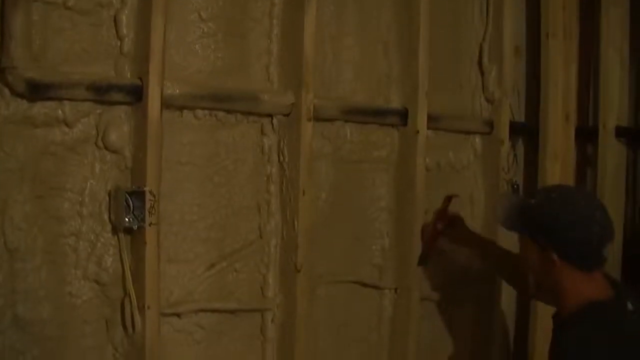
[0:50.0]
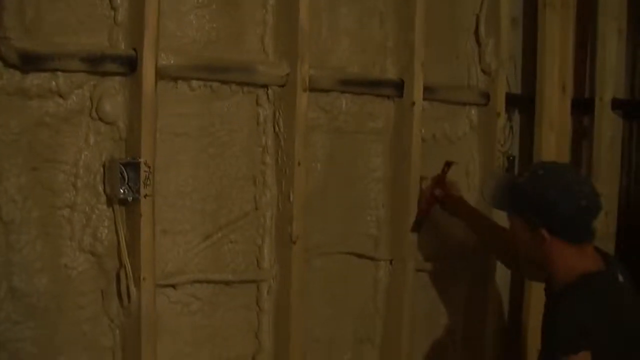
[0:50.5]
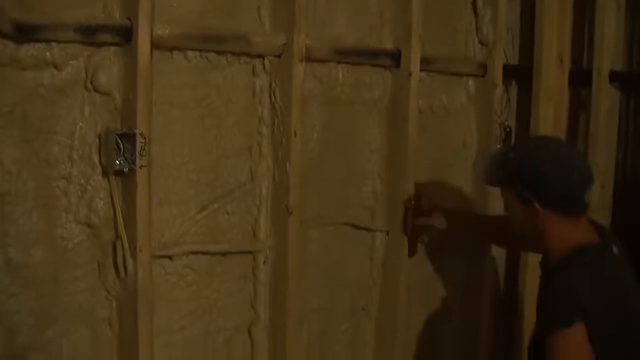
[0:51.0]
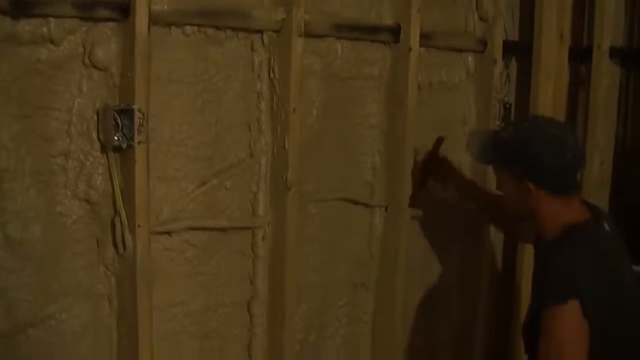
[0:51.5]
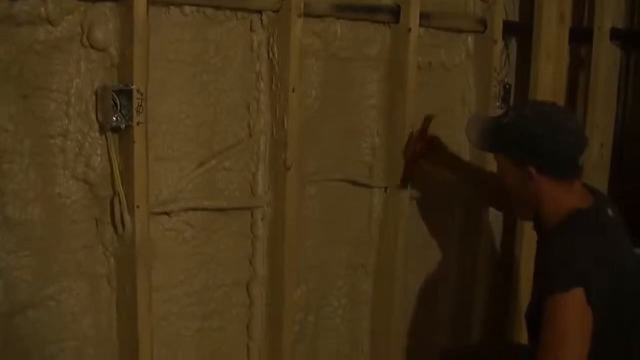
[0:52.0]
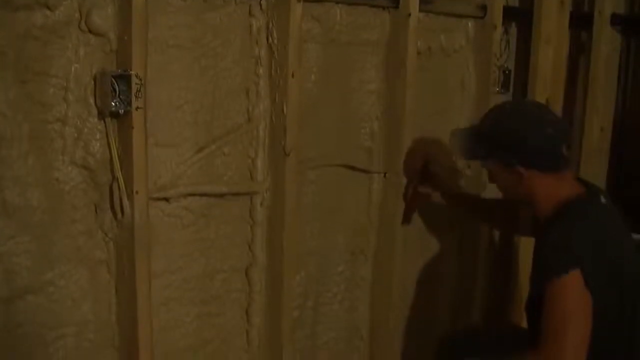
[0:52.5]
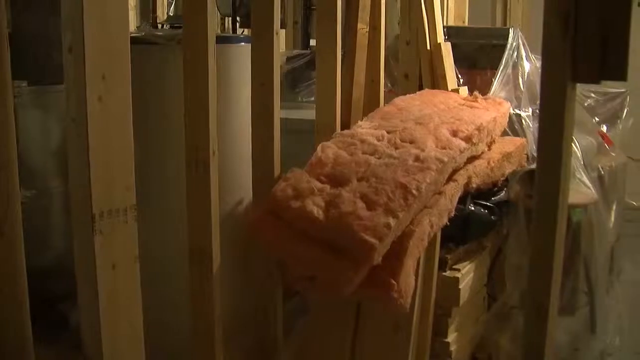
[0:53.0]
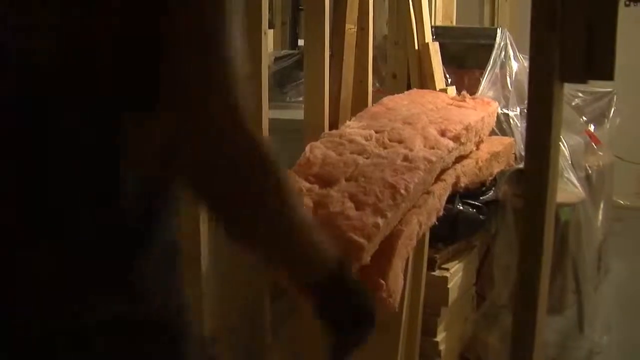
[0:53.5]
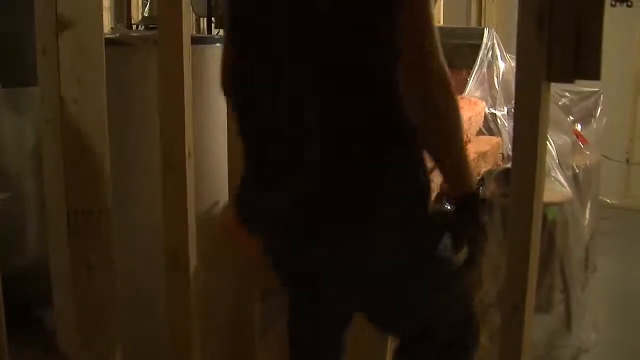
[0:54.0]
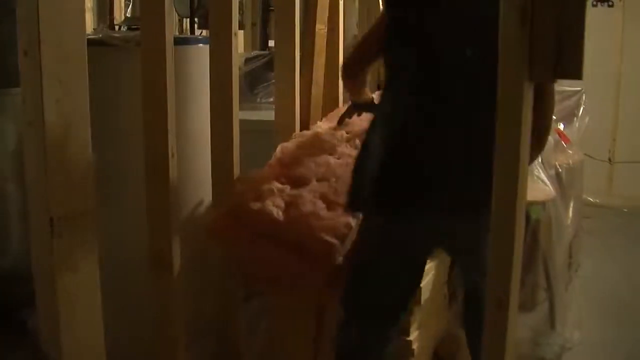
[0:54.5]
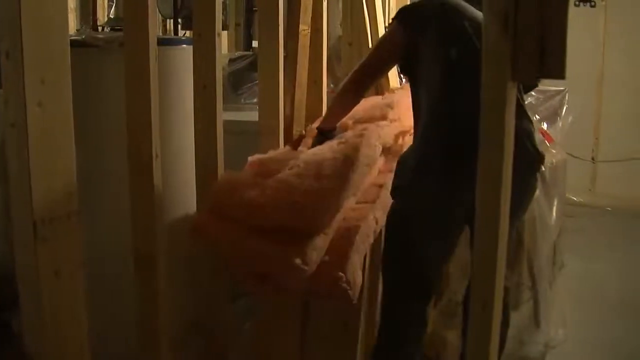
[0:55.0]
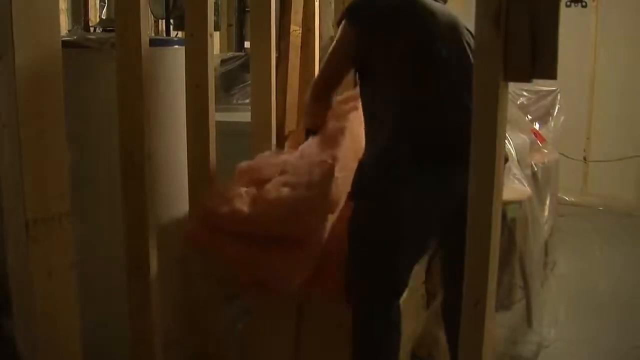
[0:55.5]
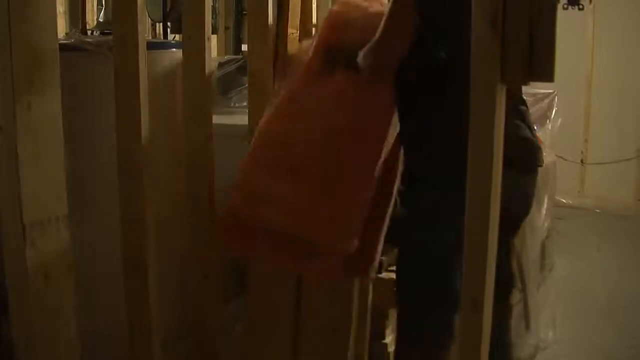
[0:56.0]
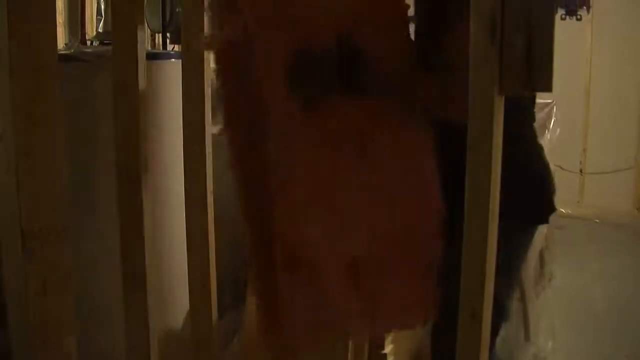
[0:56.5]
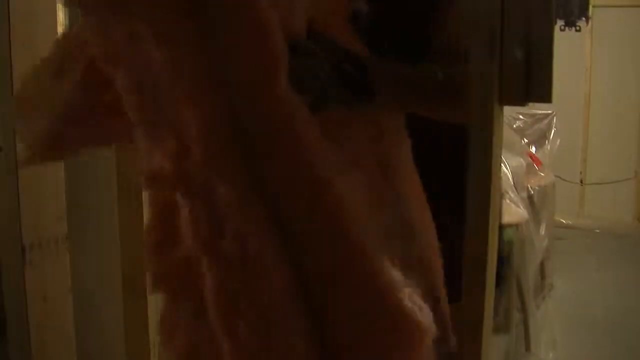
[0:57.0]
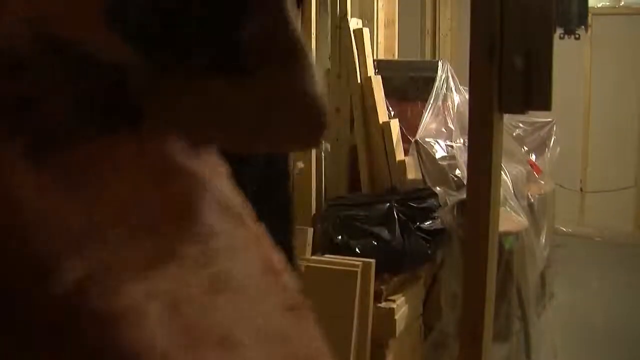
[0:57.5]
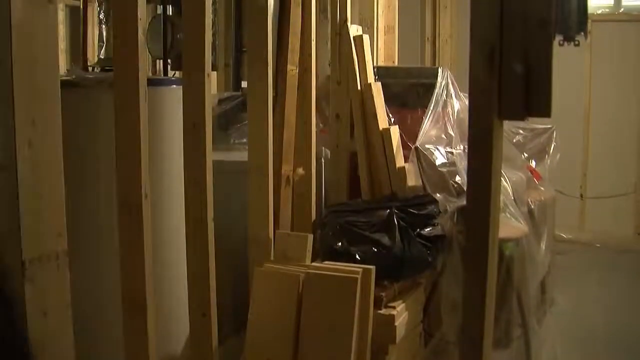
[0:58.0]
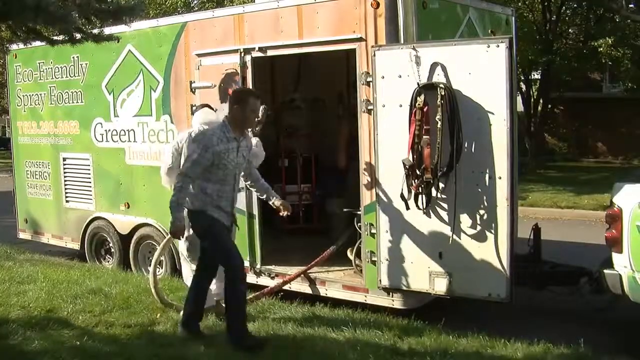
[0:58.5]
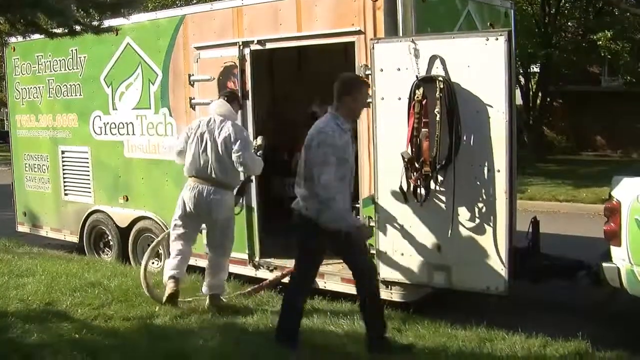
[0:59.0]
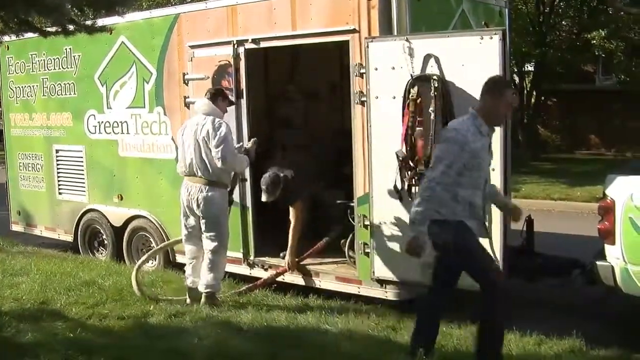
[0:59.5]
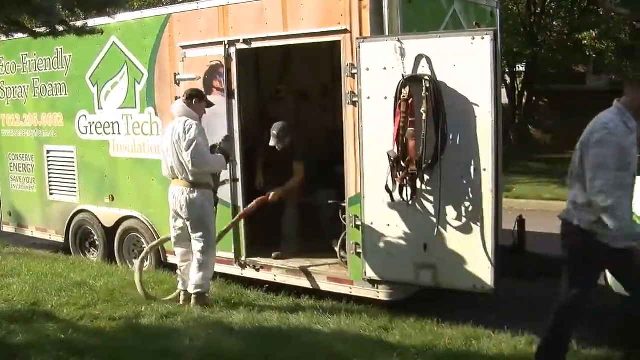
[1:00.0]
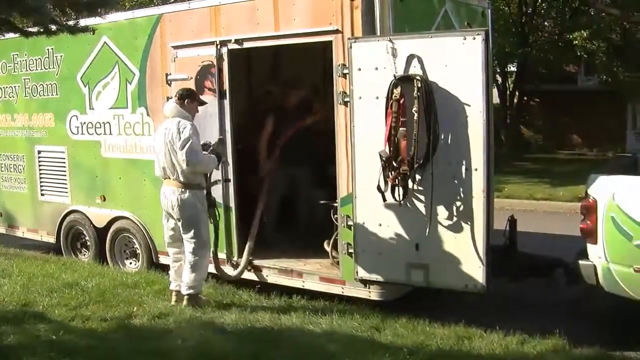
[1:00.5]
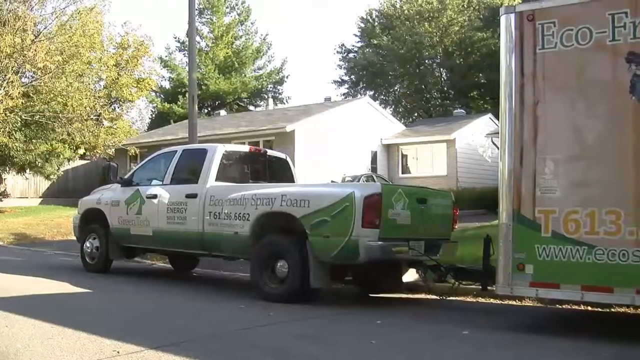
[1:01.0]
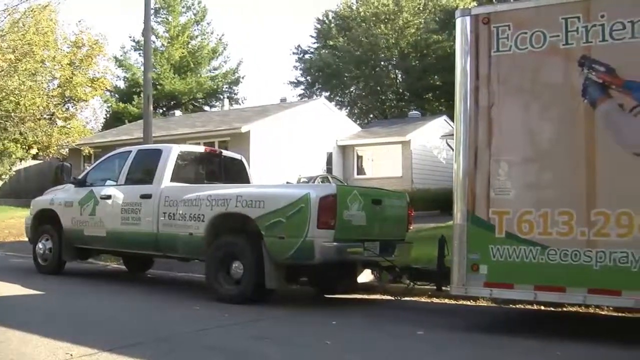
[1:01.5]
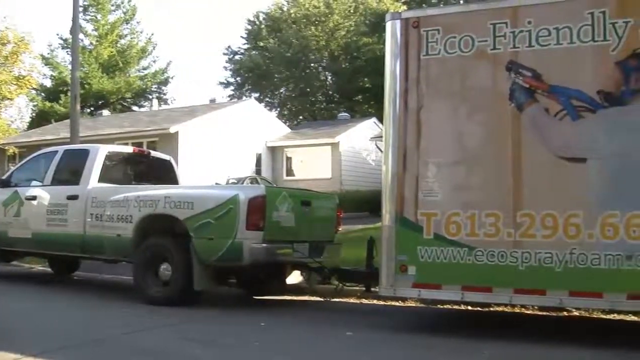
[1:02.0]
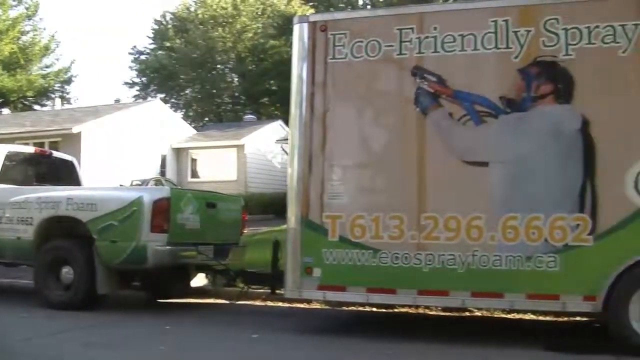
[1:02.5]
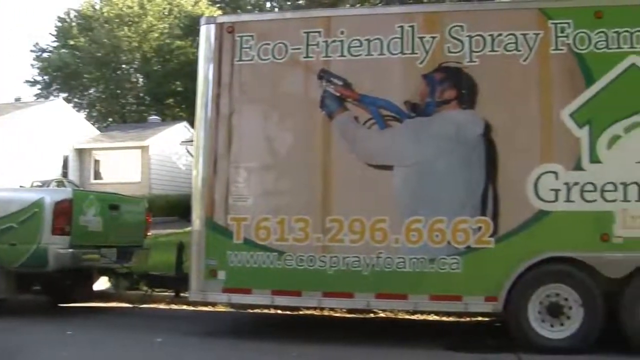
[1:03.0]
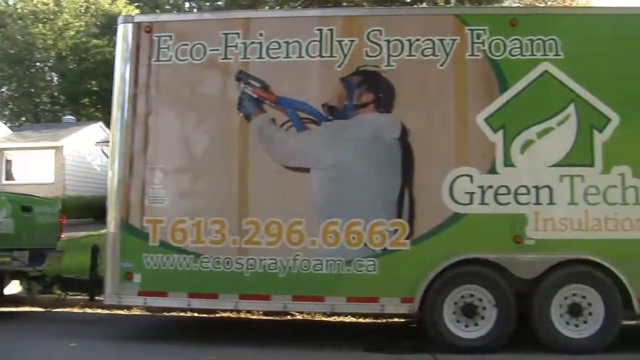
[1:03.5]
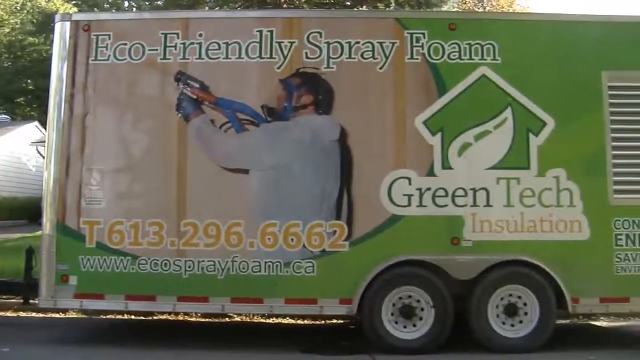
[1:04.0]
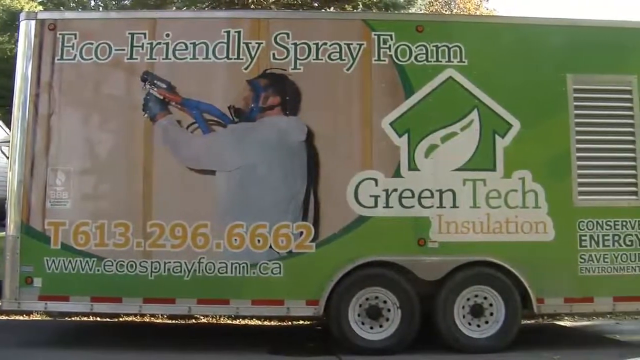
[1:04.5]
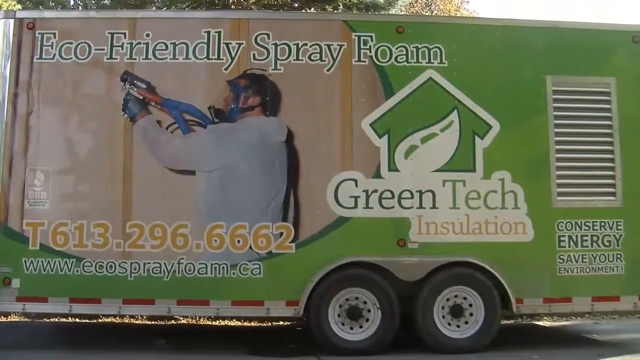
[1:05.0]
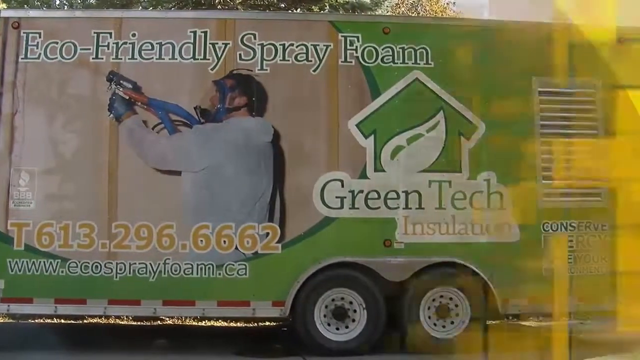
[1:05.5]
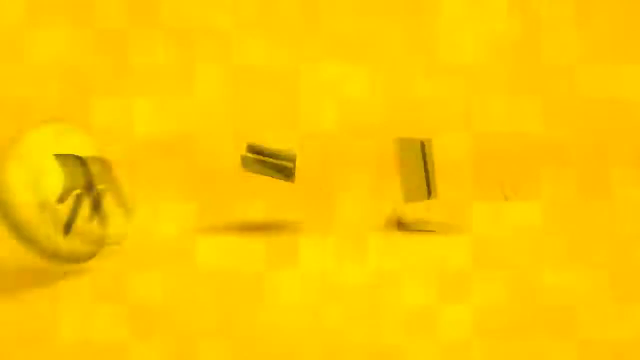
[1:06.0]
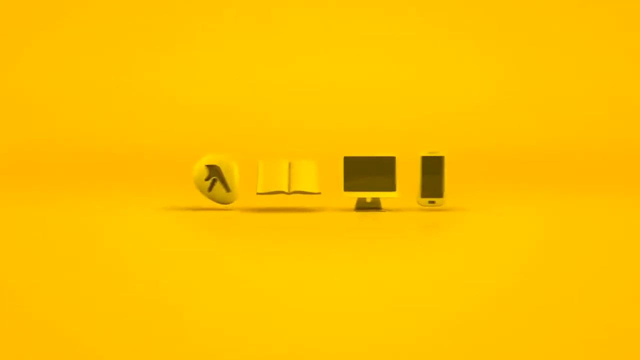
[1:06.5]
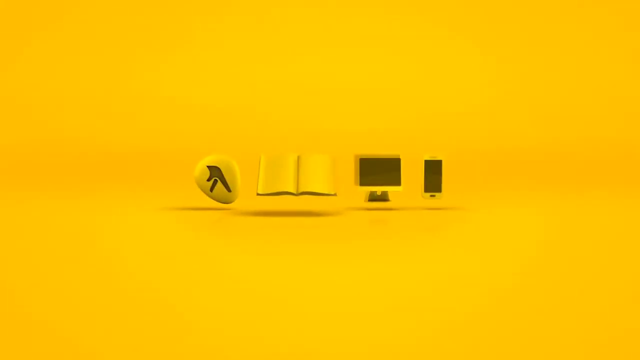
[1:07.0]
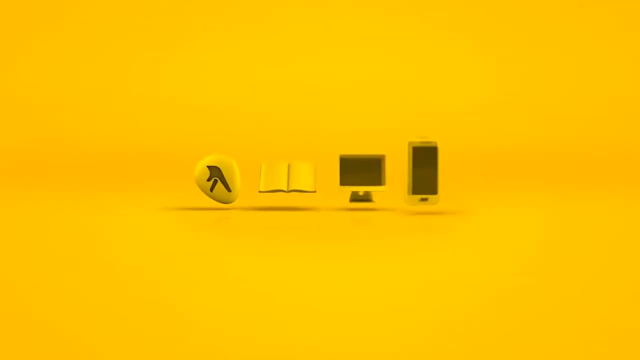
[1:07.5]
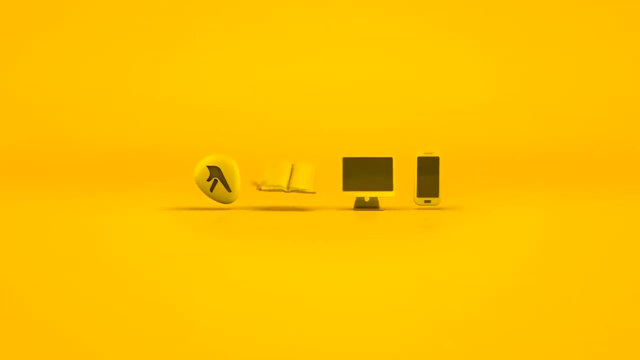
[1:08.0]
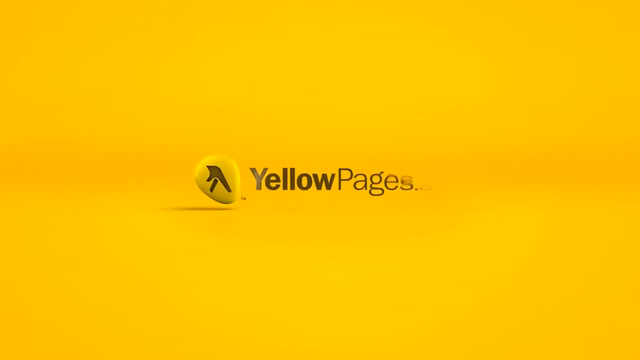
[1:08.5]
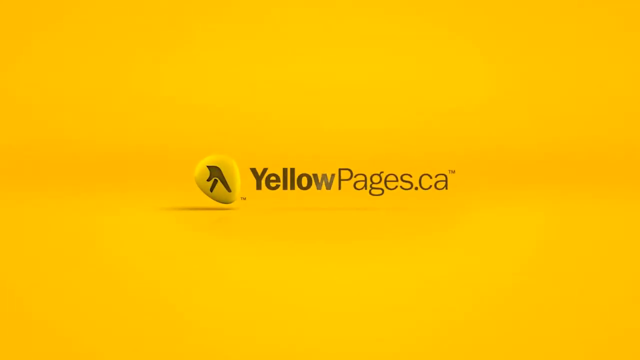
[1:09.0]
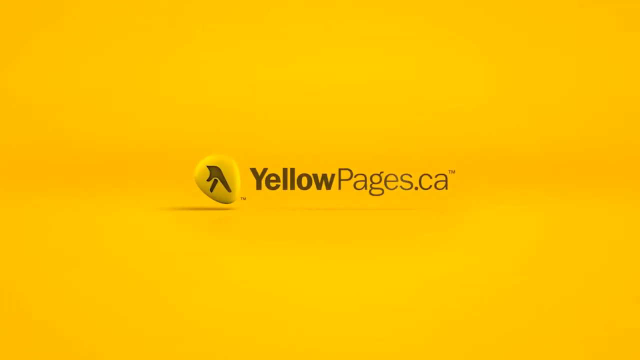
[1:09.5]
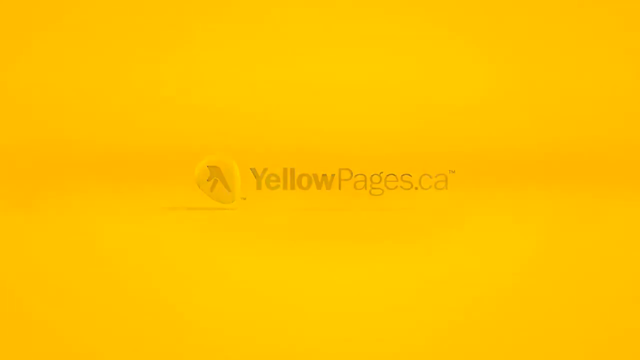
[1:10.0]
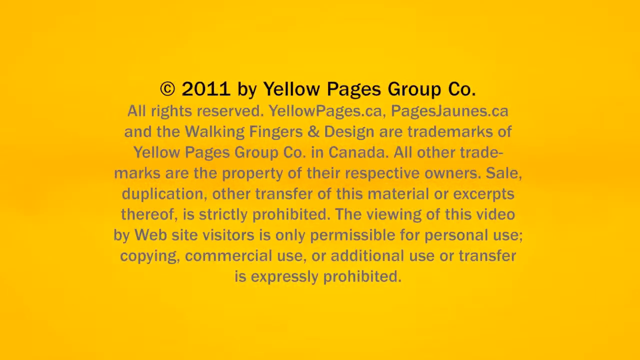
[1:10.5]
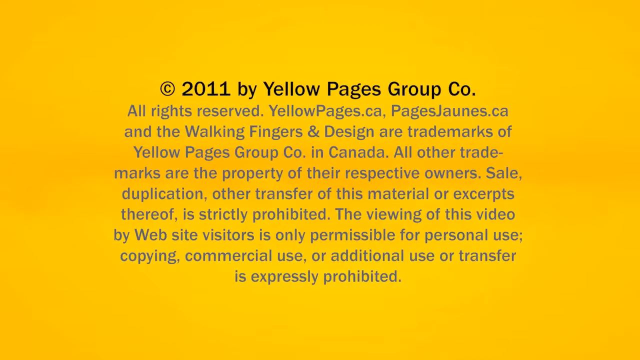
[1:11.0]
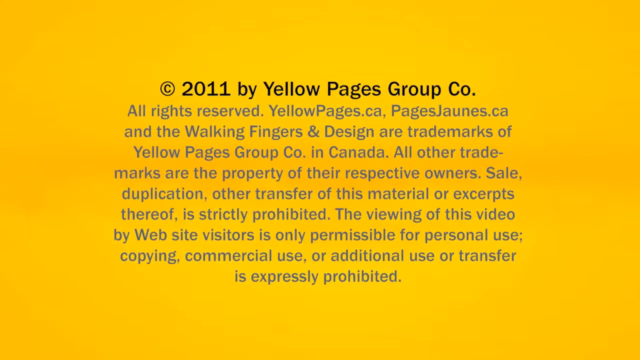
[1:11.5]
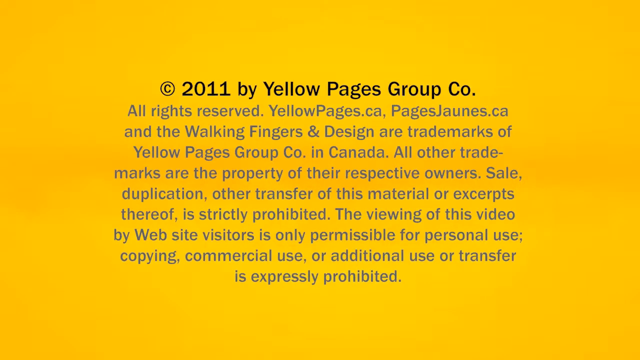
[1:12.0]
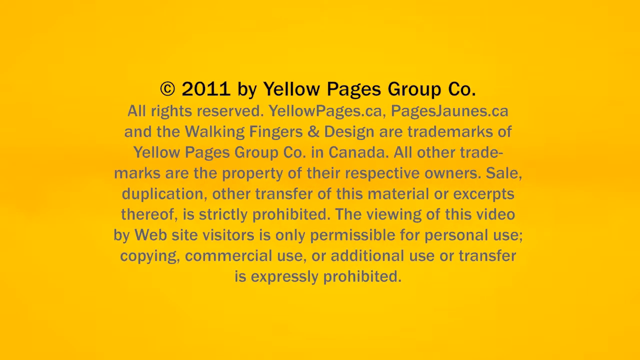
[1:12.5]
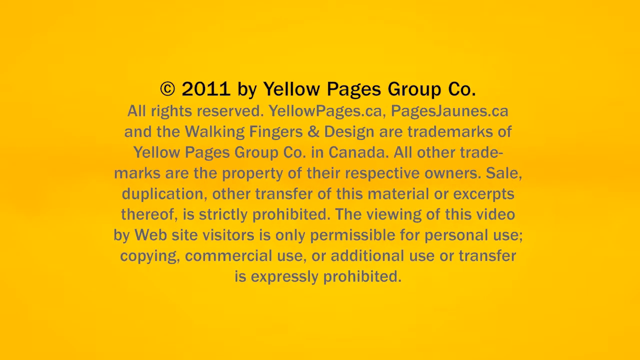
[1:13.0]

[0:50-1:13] Someone kneels with a tool like a paintbrush, possibly a scraper, scraping downward, maybe removing chunks or excess and smoothing it. Then someone walks over to a lot of foam insulation on top of some of the wood and unfinished tarps and grabs it with his gloves. The scene returns outside, where three men handle the hose coming out of the trailer: one is in his full protective suit, another wears a t-shirt, jeans and a hat, and the third is dressed regularly and walks past the camera. They appear to be pulling the hose back in, maybe finished with the job. The trailer then looks packed back up, showing "eco-friendly spray foam" and "green tech insulation" with the slogan and phone number. Finally a yellow page appears with four logos and the text "yellow pages.CA," along with a copyright message.